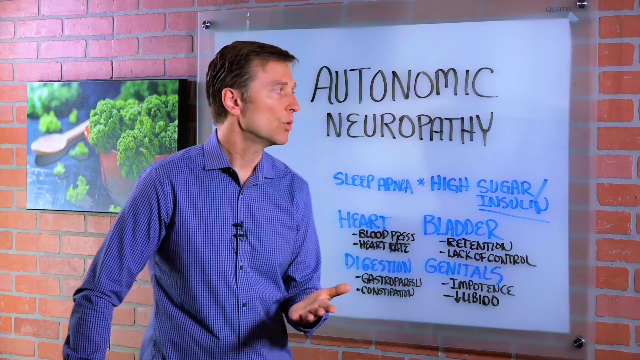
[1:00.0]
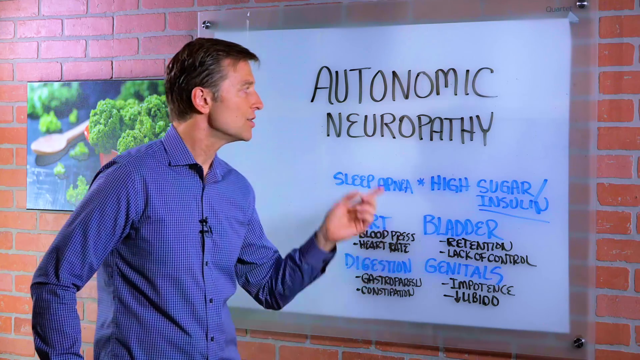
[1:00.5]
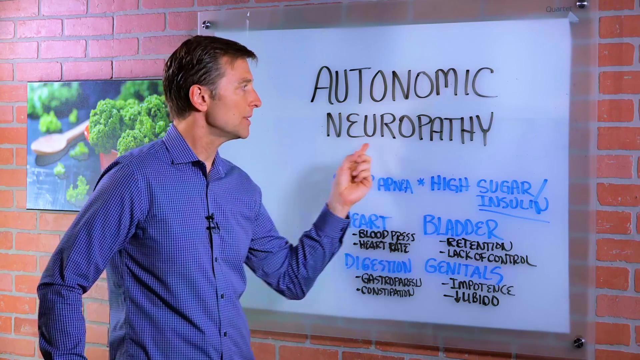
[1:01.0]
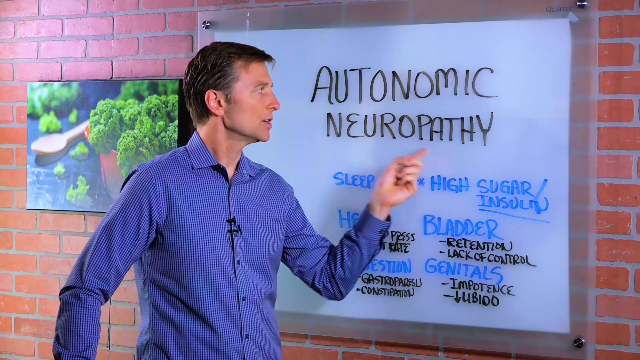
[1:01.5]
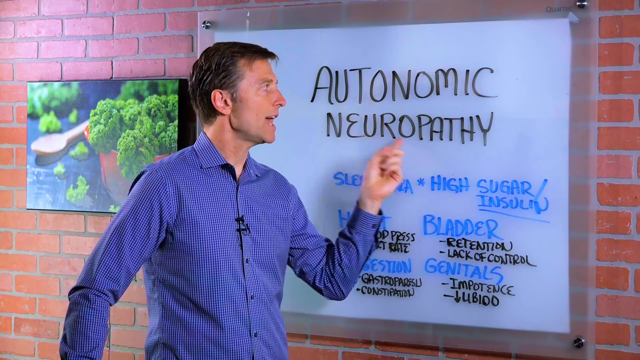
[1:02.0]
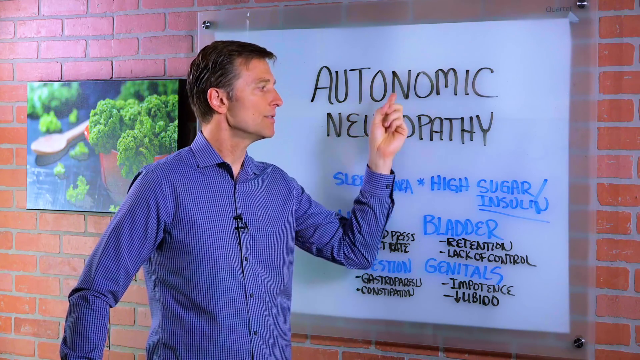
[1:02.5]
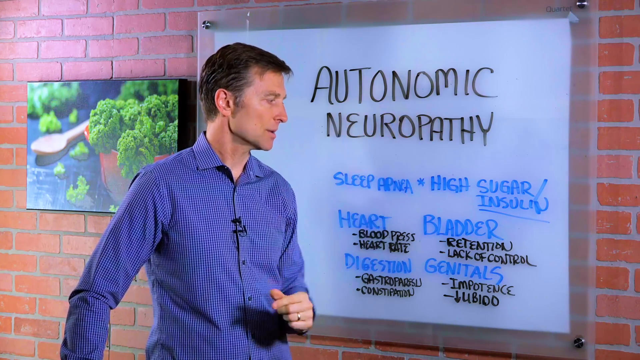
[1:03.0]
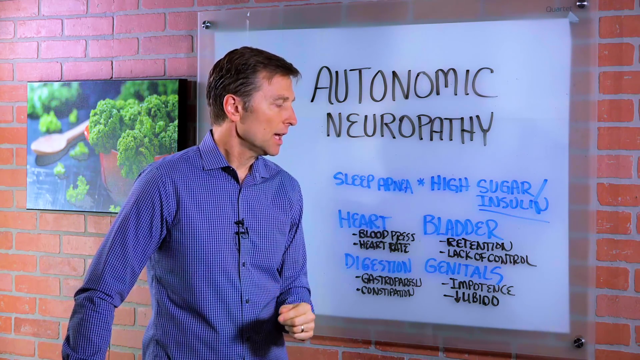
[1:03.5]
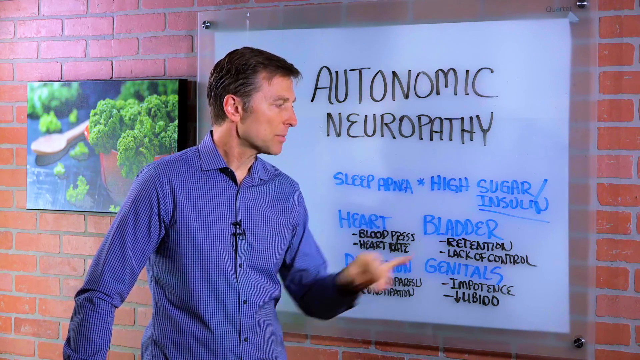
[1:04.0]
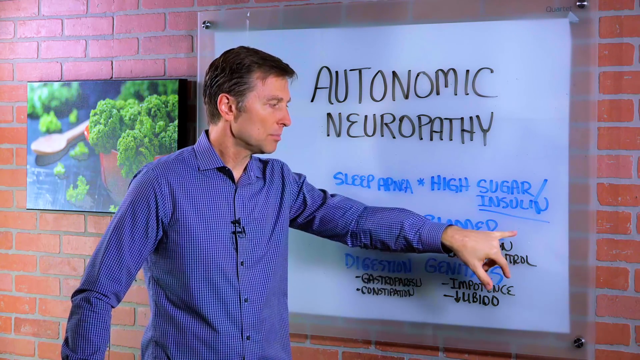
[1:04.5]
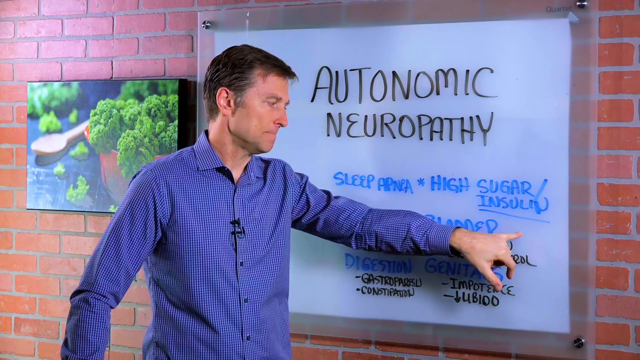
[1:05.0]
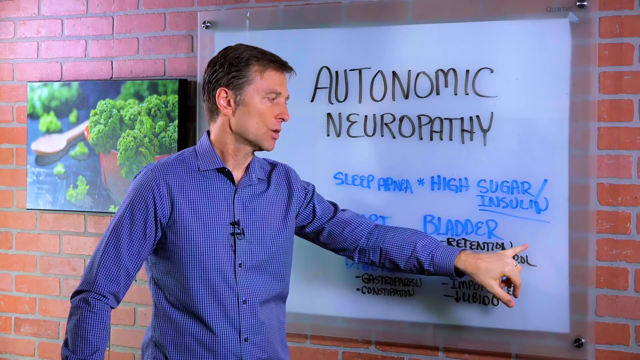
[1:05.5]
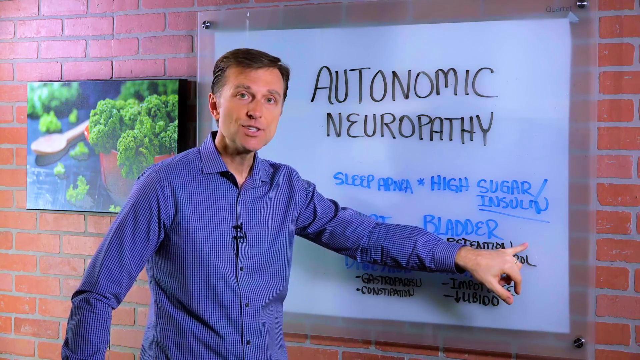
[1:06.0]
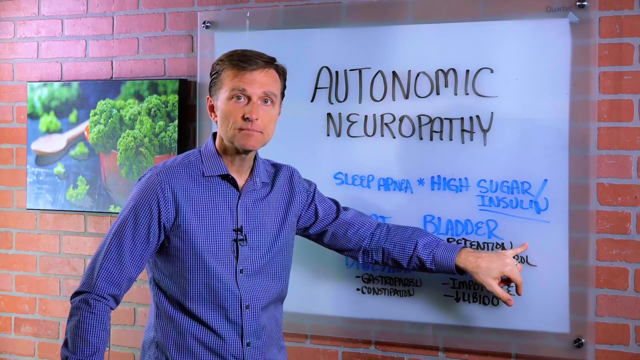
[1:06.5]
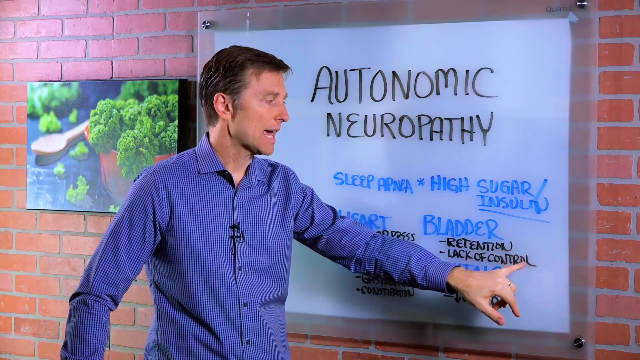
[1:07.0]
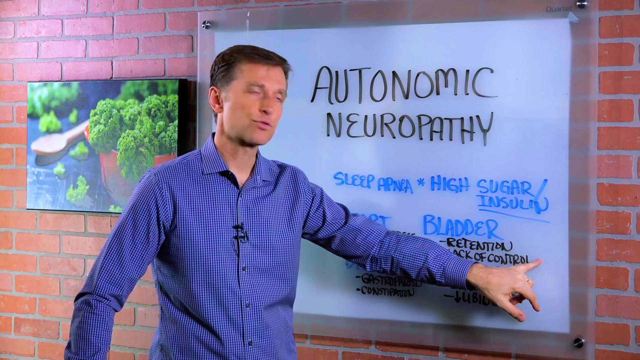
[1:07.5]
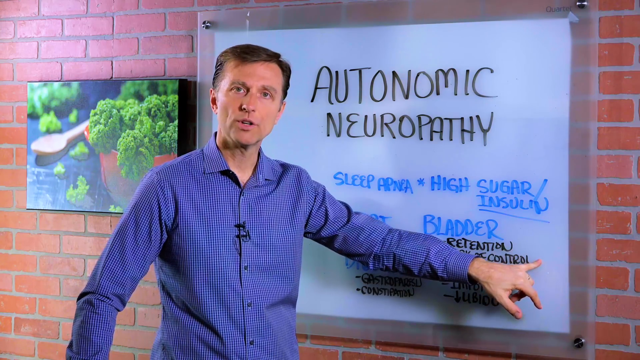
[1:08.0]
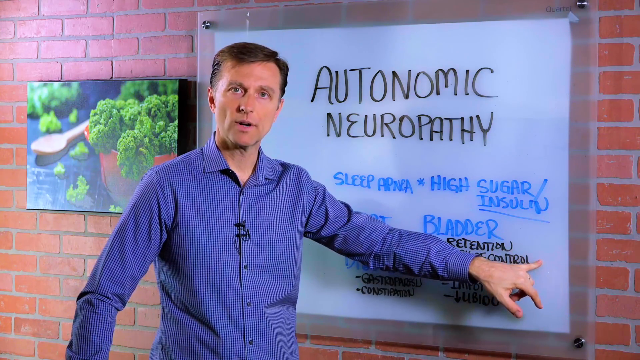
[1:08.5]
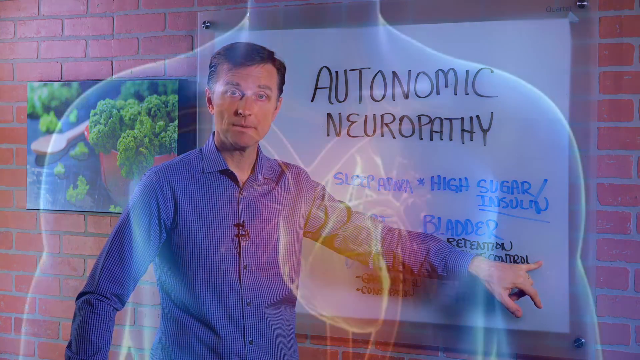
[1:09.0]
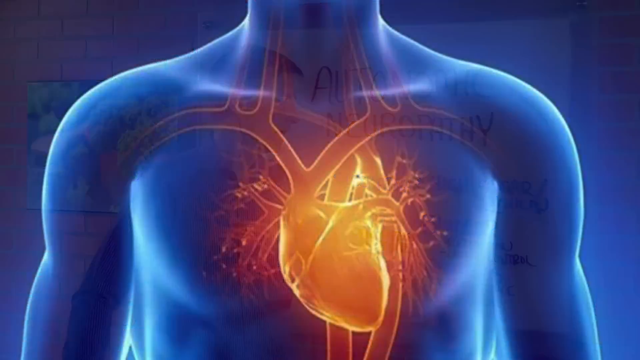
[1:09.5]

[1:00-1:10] Dr. Mandel looks to his left toward the whiteboard as he continues speaking to his audience. His right arm is outstretched a bit away from his body and bent at the elbow. His left arm is down toward his body, also bent at the elbow, with his hand facing up to show his palm and his fingers outstretched. He then turns further to his left to point toward the whiteboard, pointing with his forefinger while his other fingers are pulled in toward his palm. As he keeps speaking, he pulls his arm back away from the whiteboard, bent at the elbow, with his pointer finger pointing up. Next, he points at the whiteboard with his little finger, the other fingers of his left hand in a downward position.